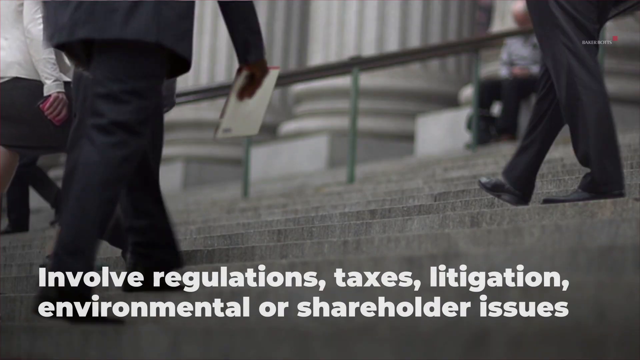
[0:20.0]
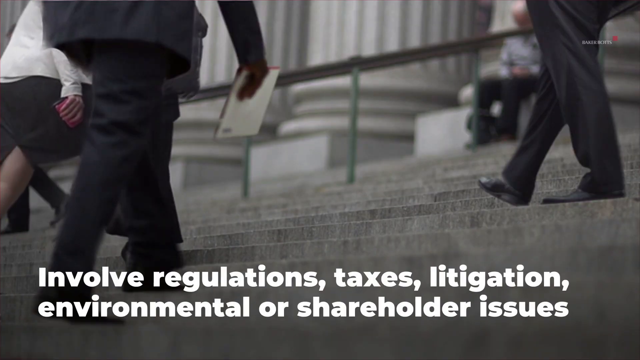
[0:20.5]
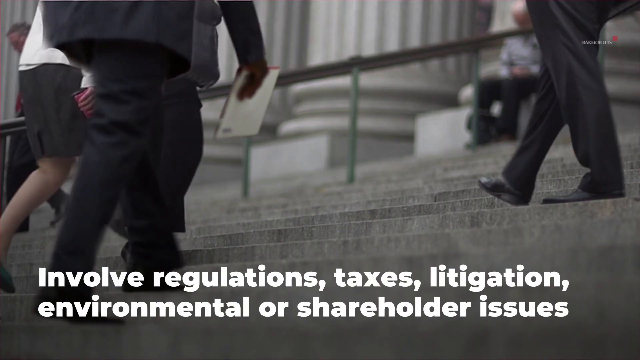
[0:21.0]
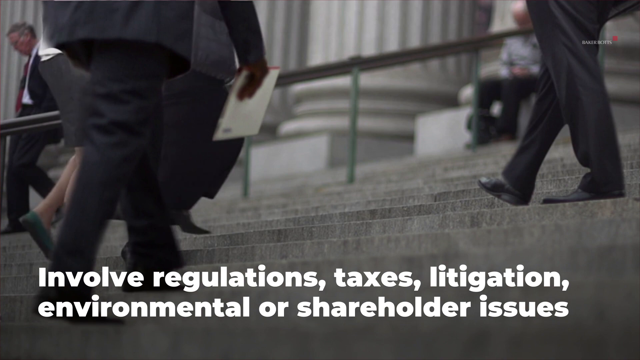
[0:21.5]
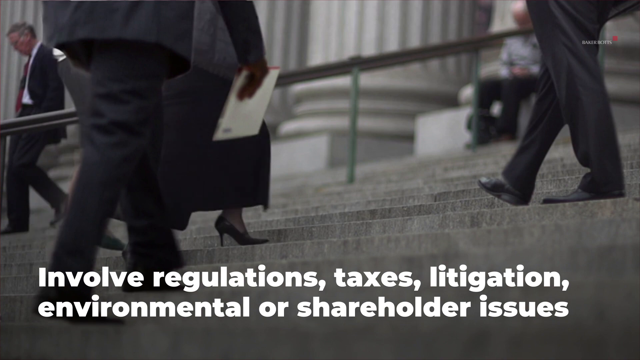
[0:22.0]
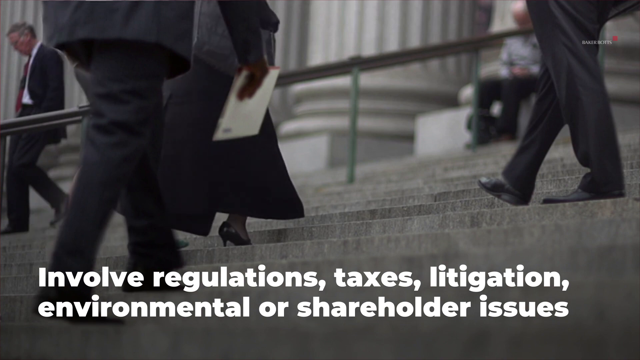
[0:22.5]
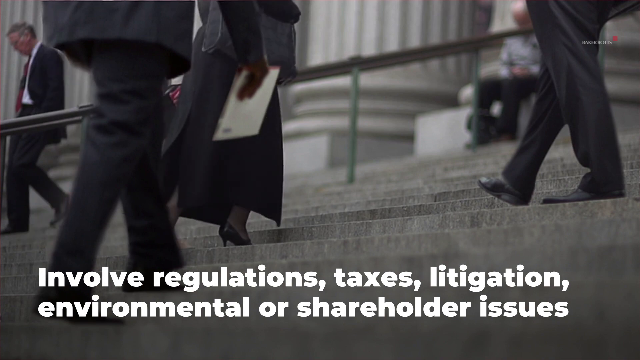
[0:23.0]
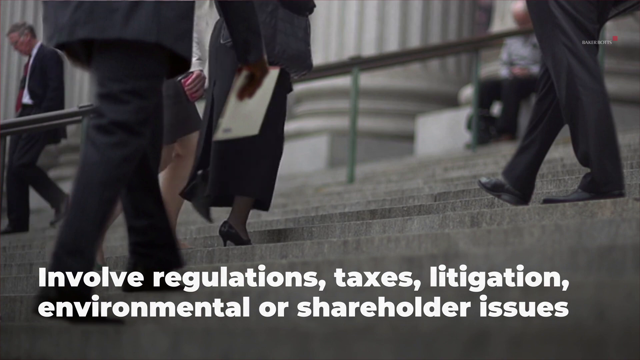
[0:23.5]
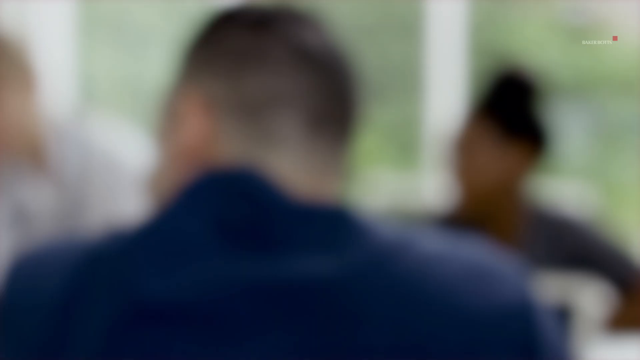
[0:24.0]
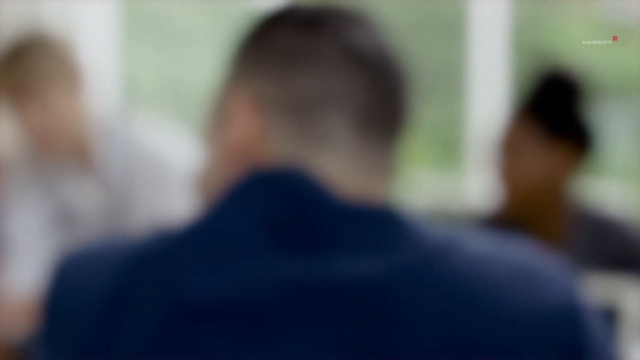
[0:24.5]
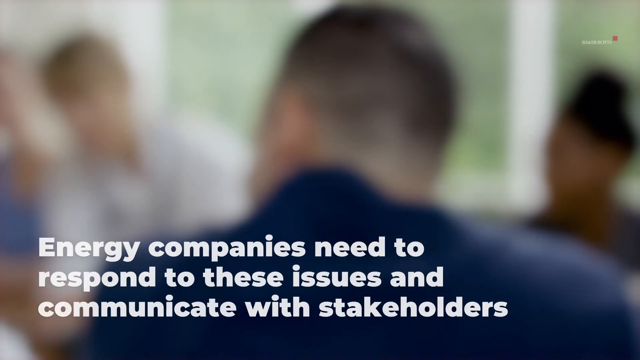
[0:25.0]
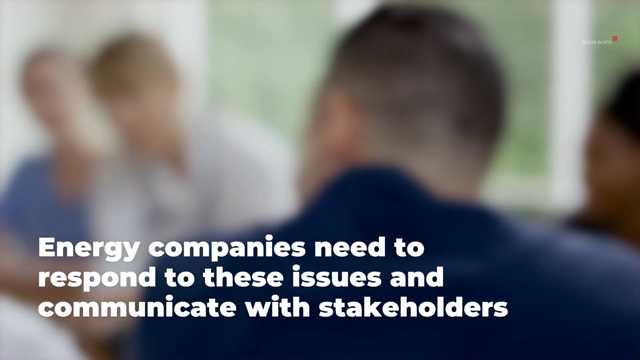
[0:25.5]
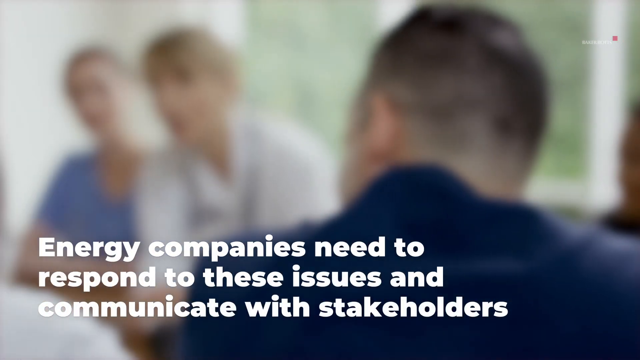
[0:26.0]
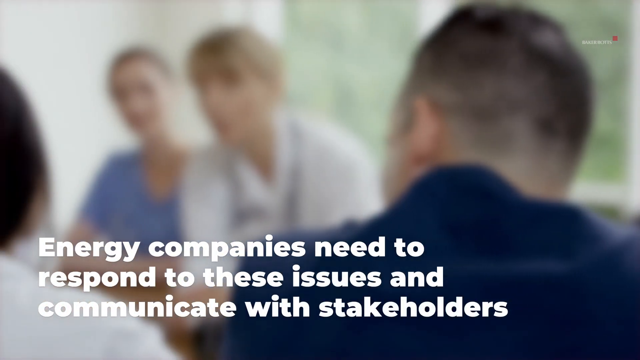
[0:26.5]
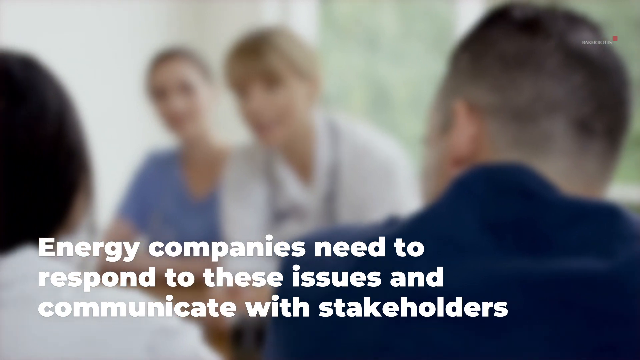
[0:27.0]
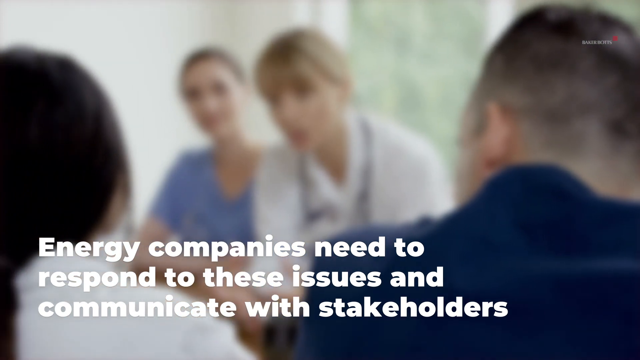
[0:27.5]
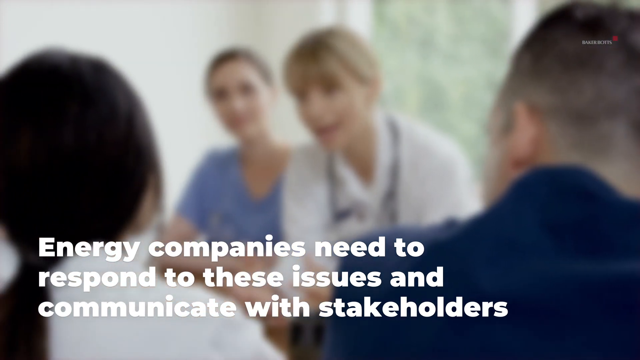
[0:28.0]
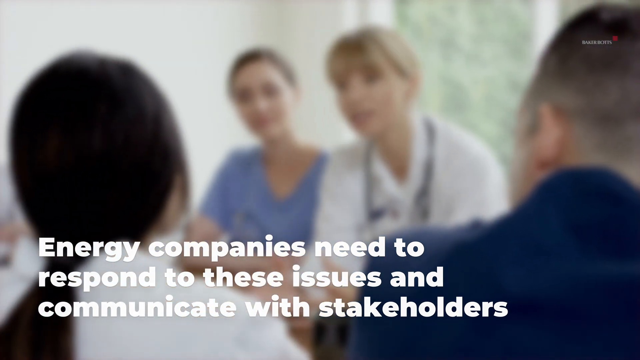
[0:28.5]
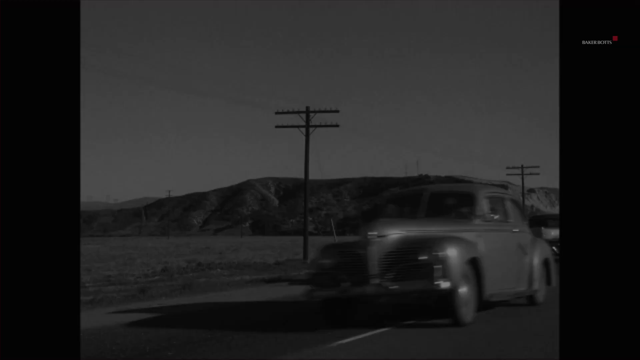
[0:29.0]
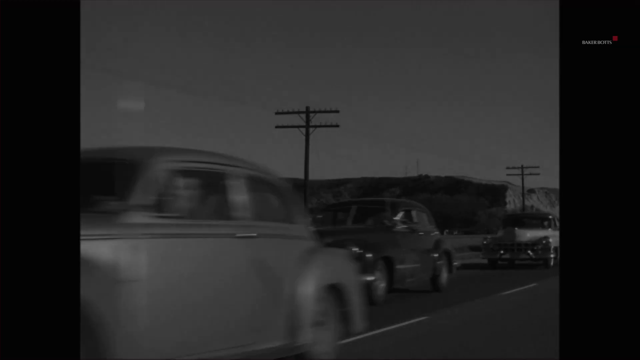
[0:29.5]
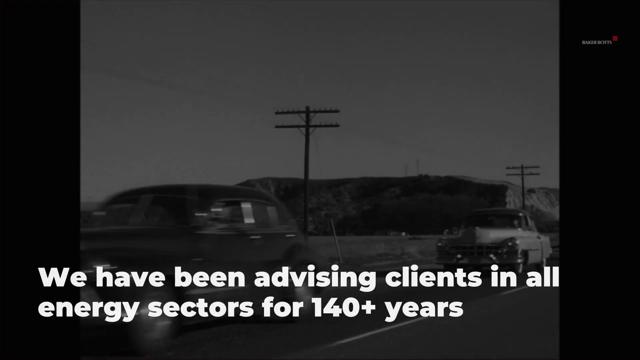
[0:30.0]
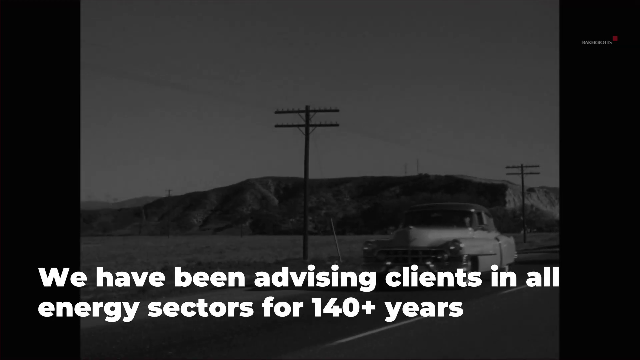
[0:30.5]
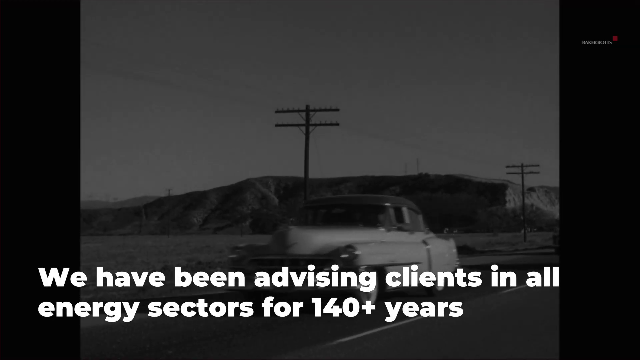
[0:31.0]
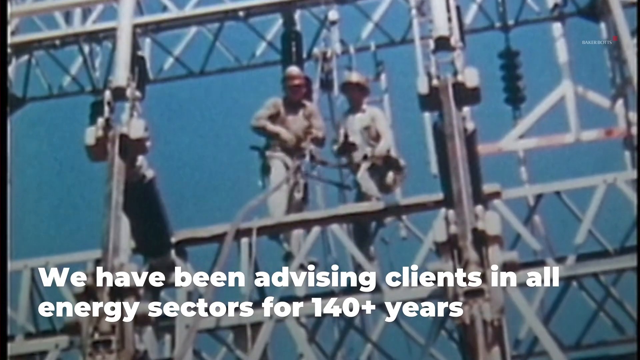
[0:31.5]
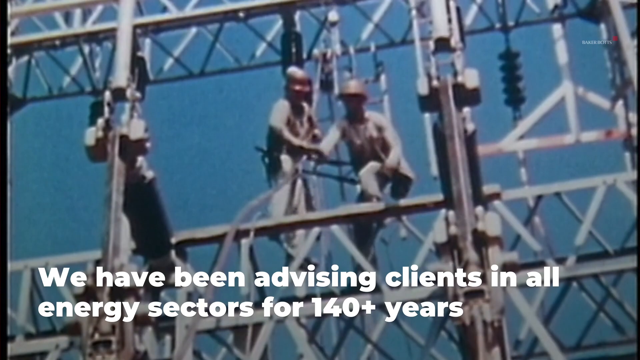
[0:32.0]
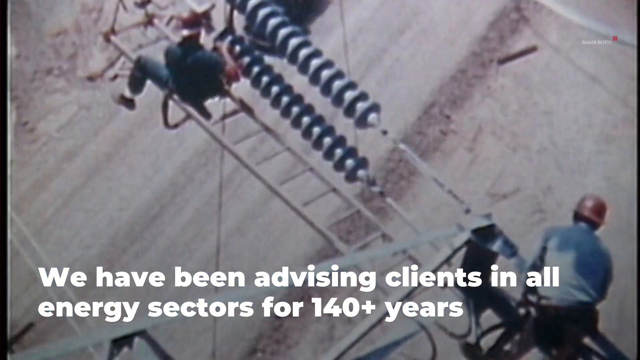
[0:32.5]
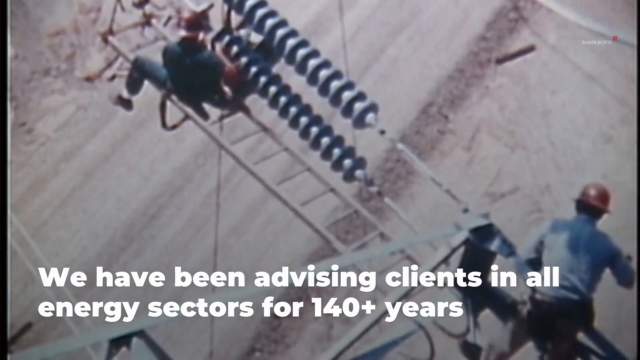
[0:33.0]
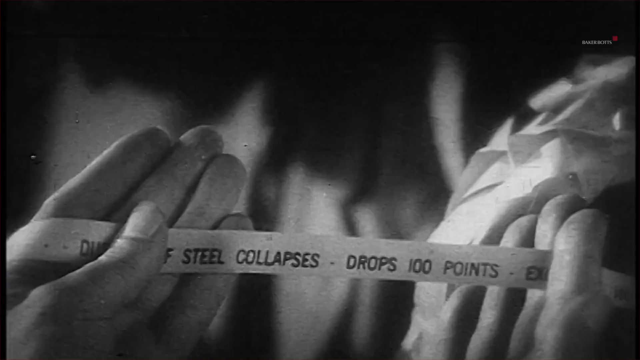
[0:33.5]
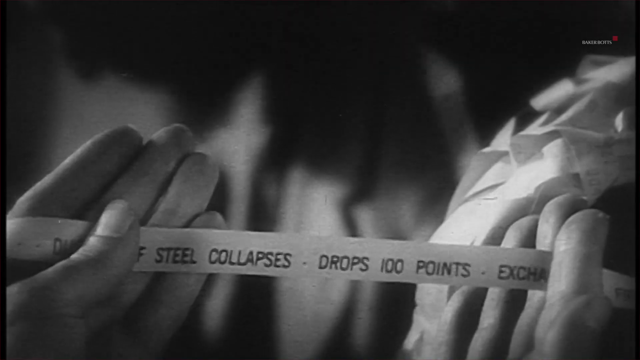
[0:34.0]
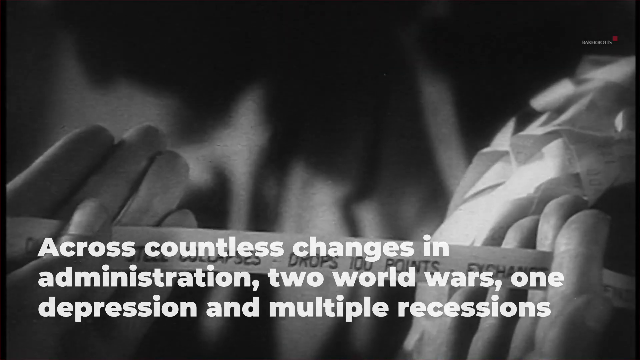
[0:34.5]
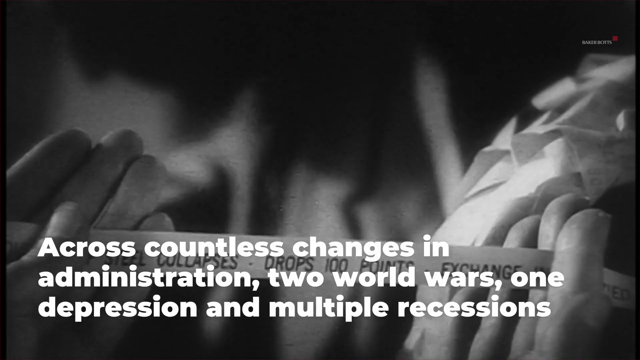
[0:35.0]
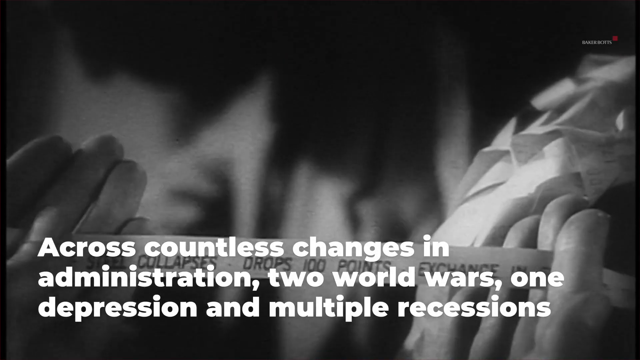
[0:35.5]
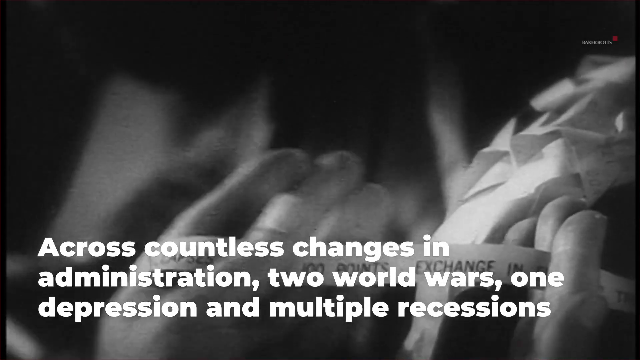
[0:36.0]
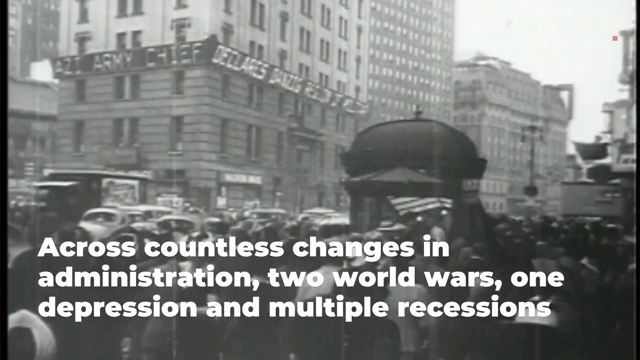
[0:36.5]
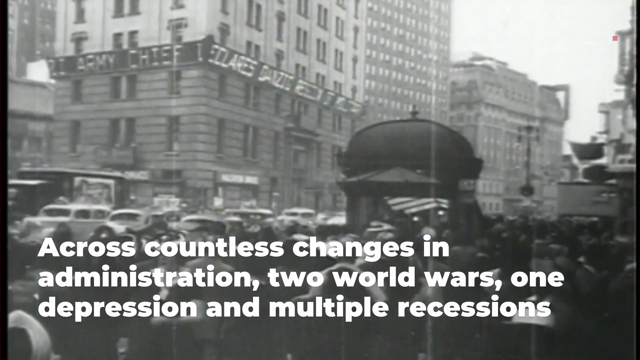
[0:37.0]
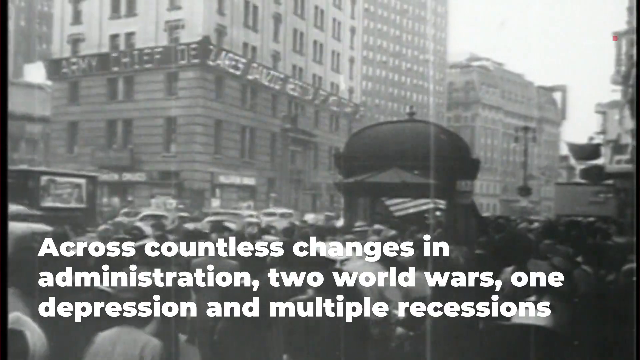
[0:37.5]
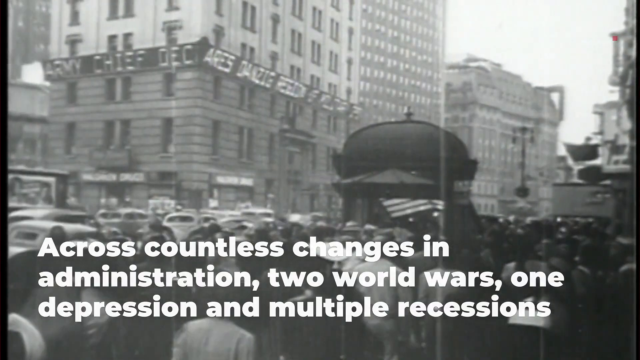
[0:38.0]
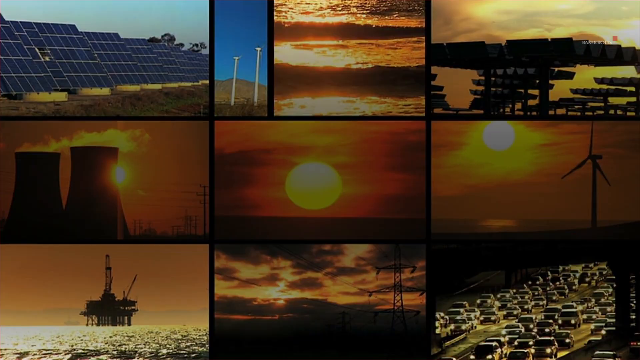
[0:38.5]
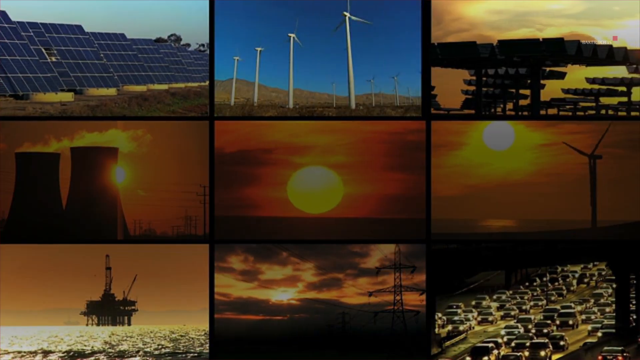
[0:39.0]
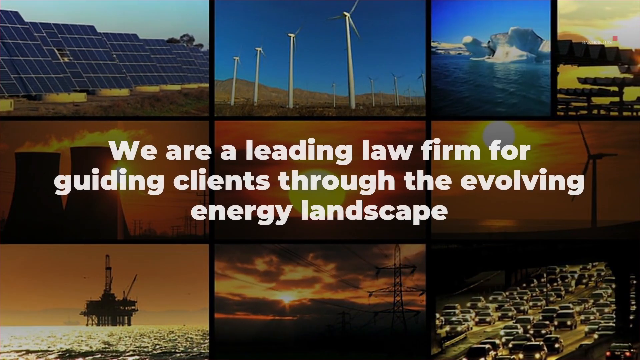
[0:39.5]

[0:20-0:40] On the stairs of the government building there are maybe three men in suits. Two men in dark-colored suits walk toward the building, one carrying a folder or notebook. Another man walks down the steps away from the building with his hands in his pocket; he wears a dark-colored suit with a white shirt and a red tie. Another man is sitting on one of the building's very large columns, wearing a light-colored shirt and dark pants, with a bag between his legs. There appear to be two women walking up the steps: one wears a long skirt, a black shoulder bag and black high-heel shoes, and the other wears a white shirt, a mini skirt and green shoes, her legs much more prominent. The next scene is a blurred shot of people sitting, probably in a room, at a table. One person has their back to the camera, and two people face the camera but look at each other. Text says "energy companies need to respond to these issues and communicate with stakeholders." The camera pans across the room, revealing many more people at the table, talking and not engaging with the camera; some look towards the camera while others have their backs to it. The scene then goes to older cars on an expressway, perhaps from 60 to 80 years ago; the cars appear to be 1940s and 1950s era cars of different colors and kinds, driving fast along a highway lined with electricity poles. Text reads "we have been advising clients in all energy sectors for 140 plus years."